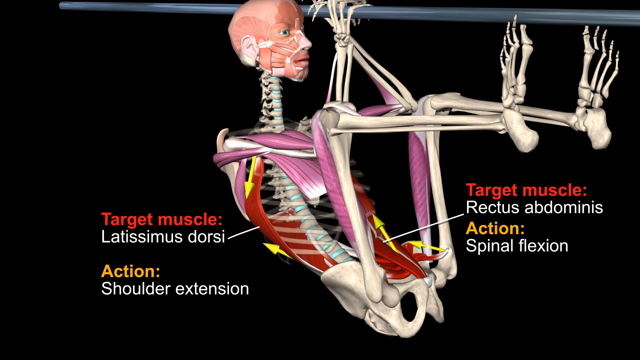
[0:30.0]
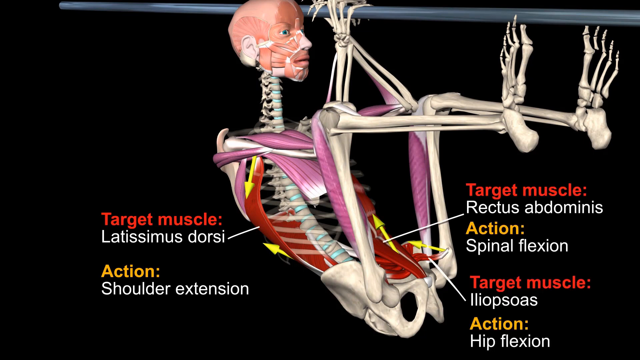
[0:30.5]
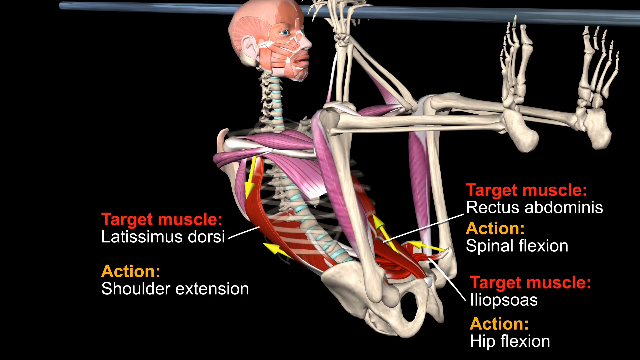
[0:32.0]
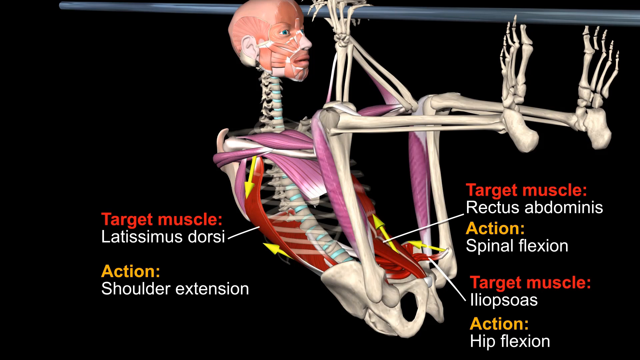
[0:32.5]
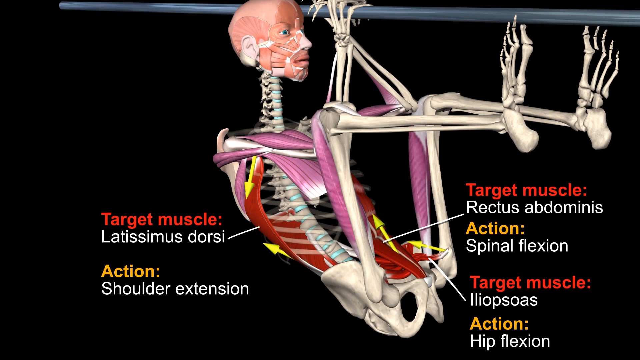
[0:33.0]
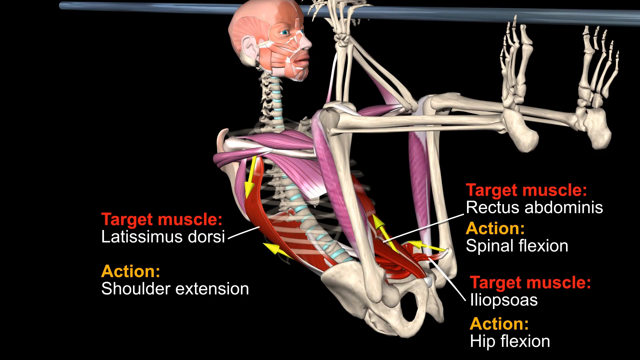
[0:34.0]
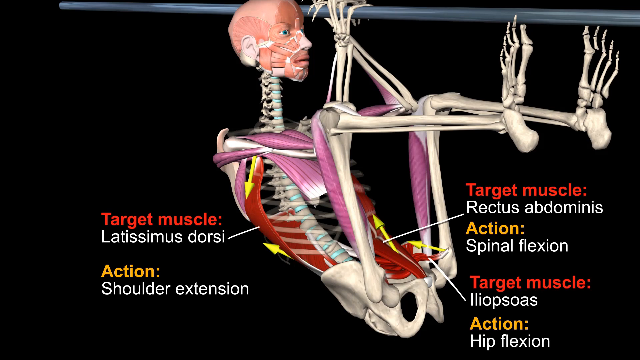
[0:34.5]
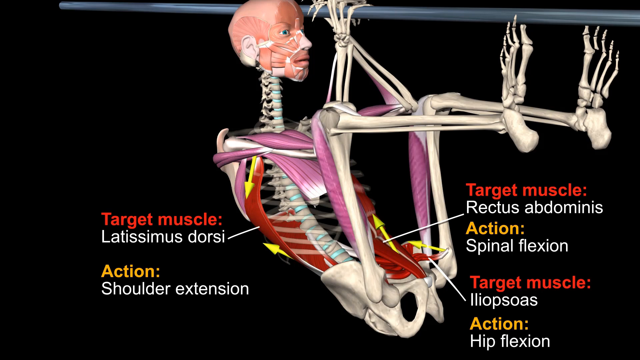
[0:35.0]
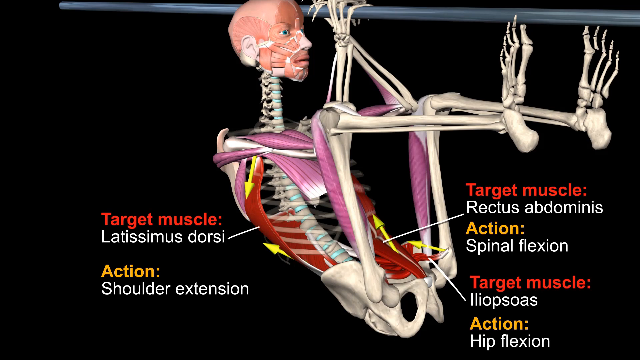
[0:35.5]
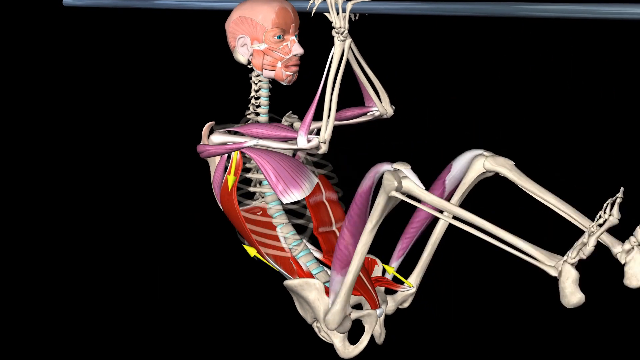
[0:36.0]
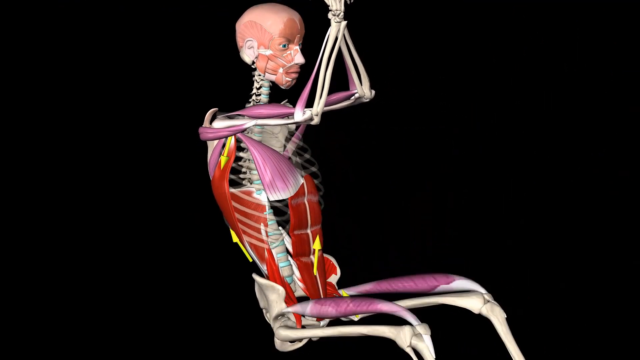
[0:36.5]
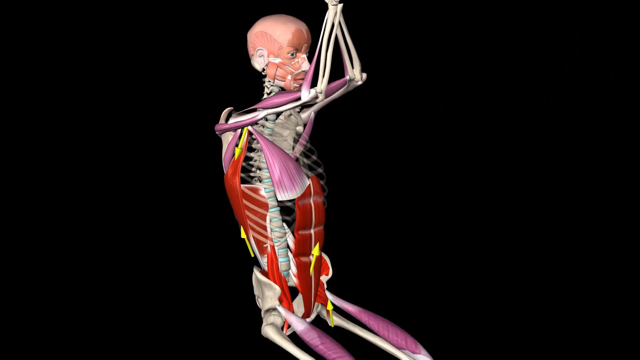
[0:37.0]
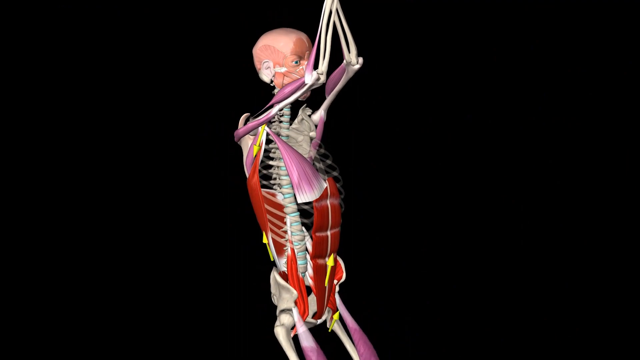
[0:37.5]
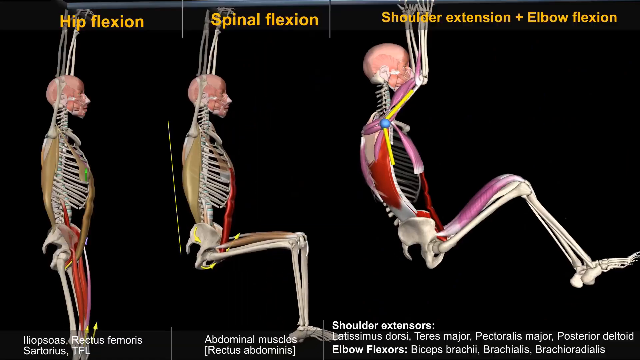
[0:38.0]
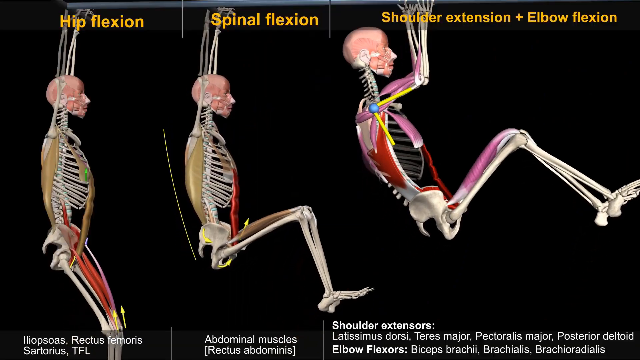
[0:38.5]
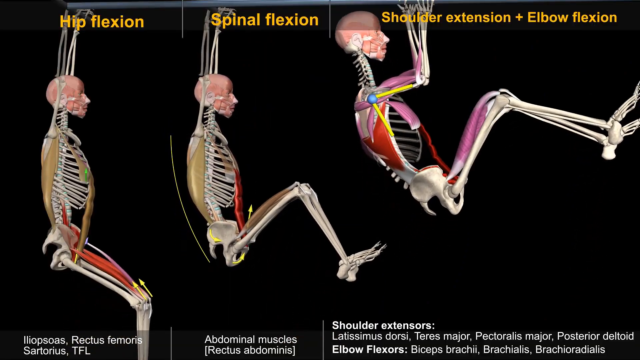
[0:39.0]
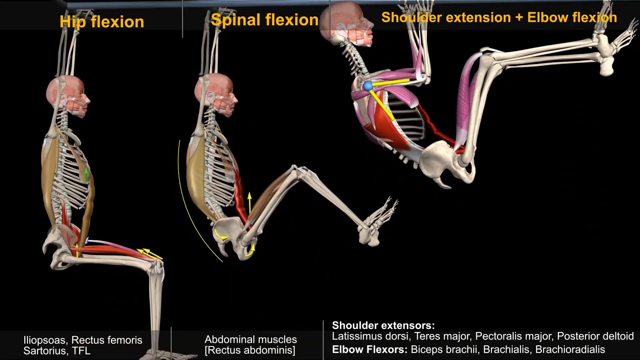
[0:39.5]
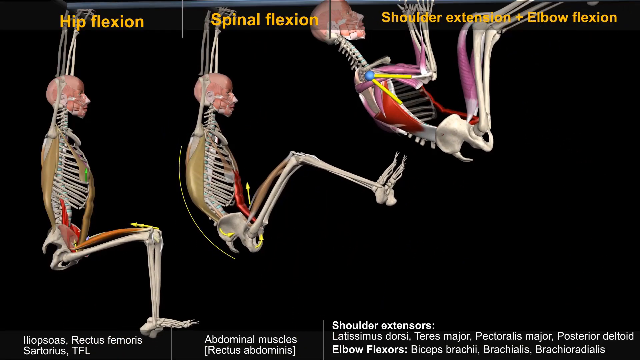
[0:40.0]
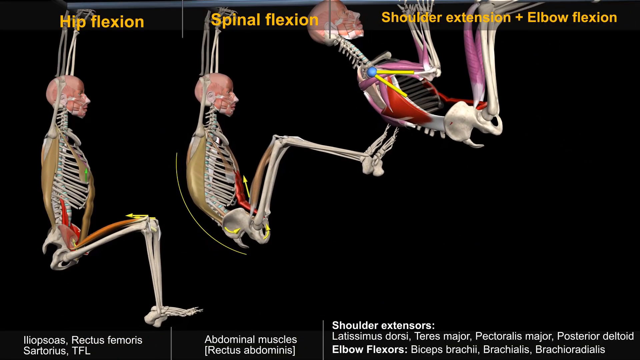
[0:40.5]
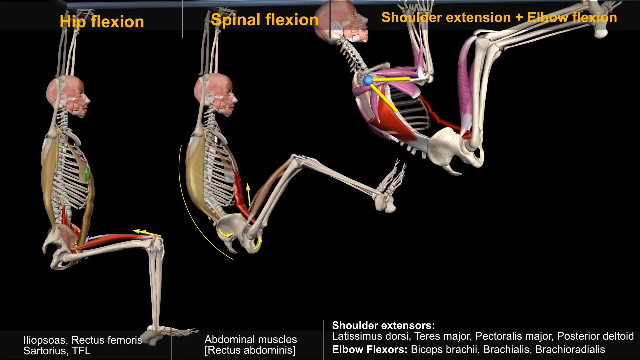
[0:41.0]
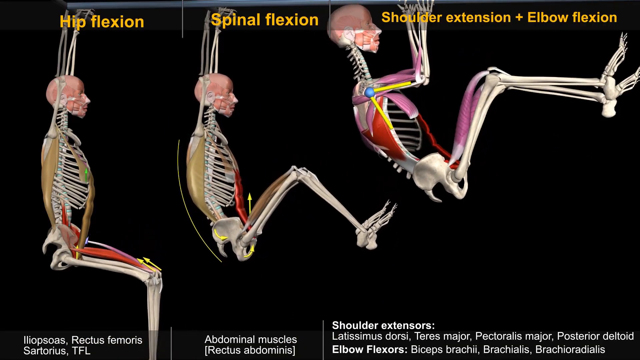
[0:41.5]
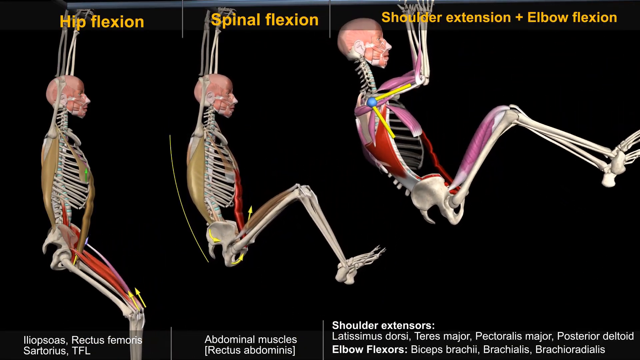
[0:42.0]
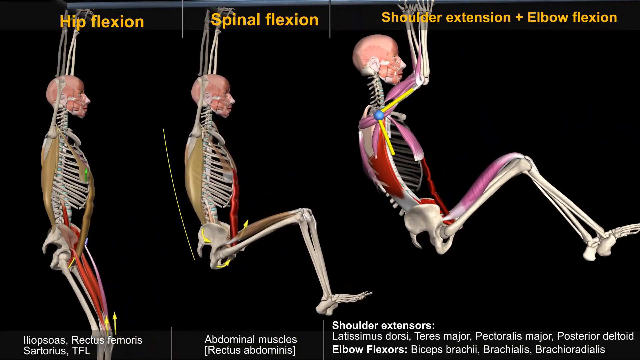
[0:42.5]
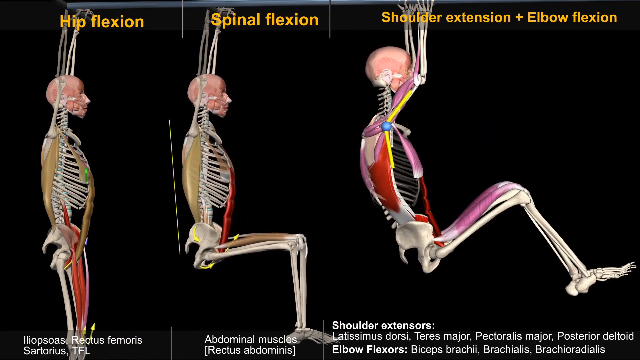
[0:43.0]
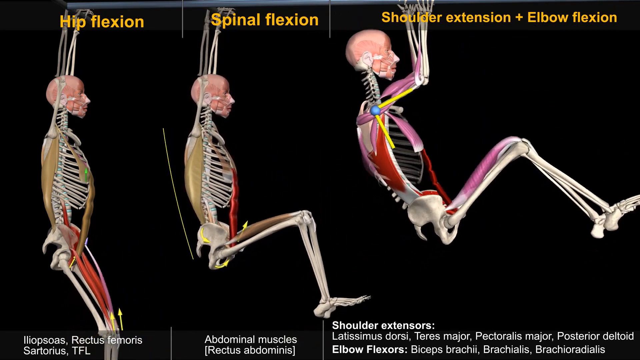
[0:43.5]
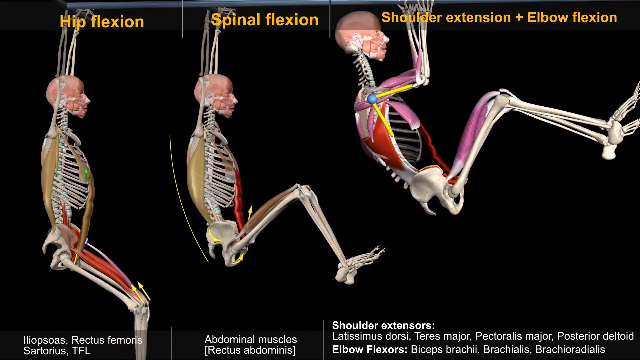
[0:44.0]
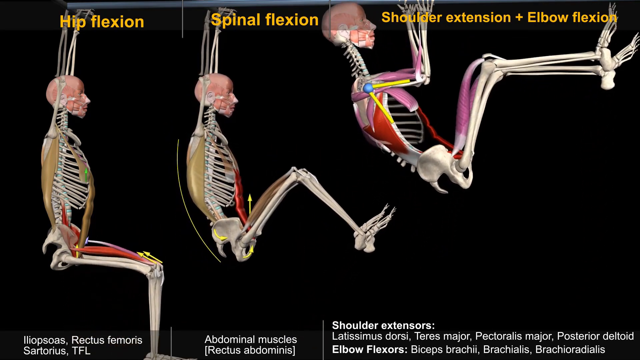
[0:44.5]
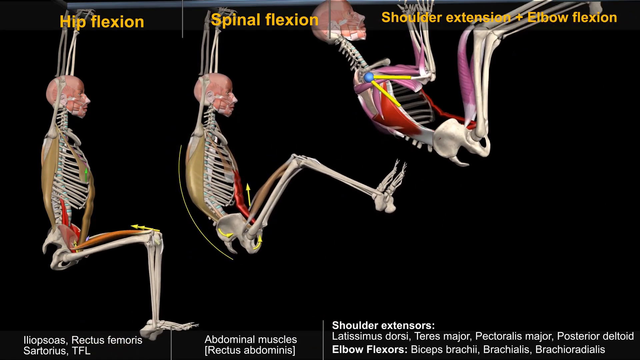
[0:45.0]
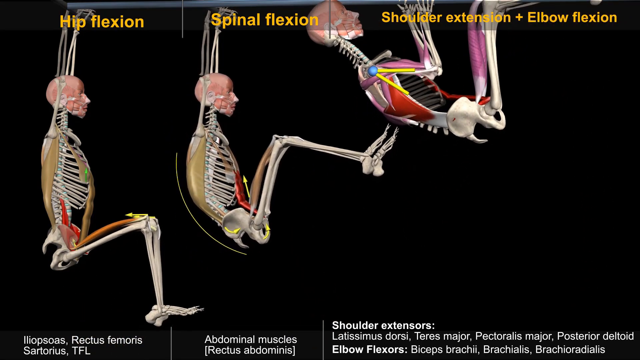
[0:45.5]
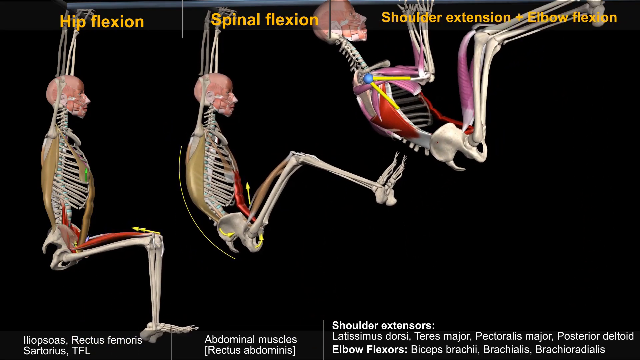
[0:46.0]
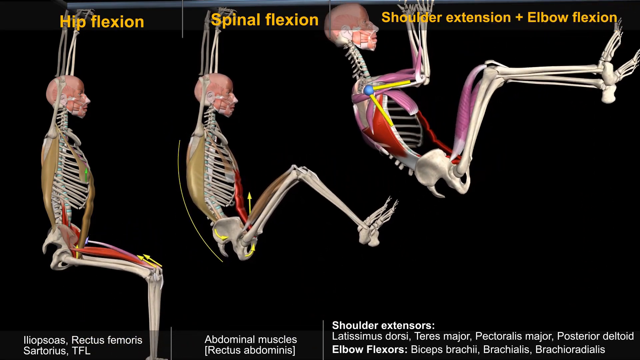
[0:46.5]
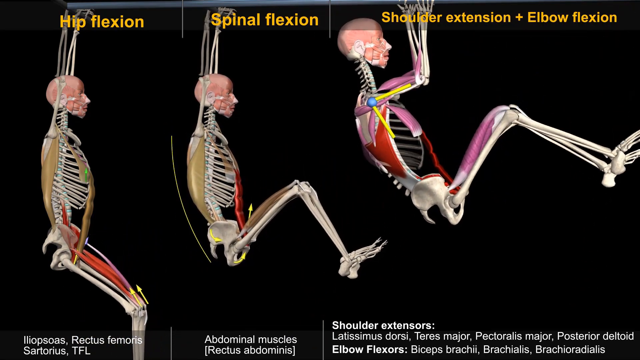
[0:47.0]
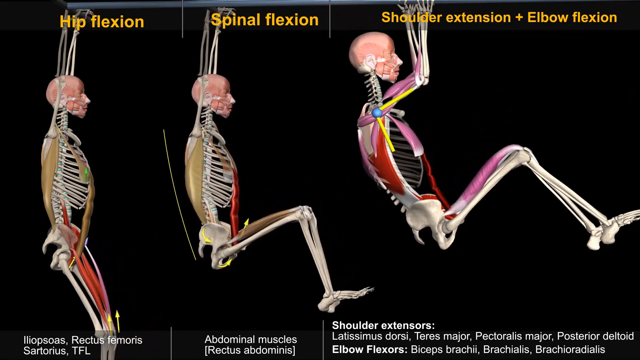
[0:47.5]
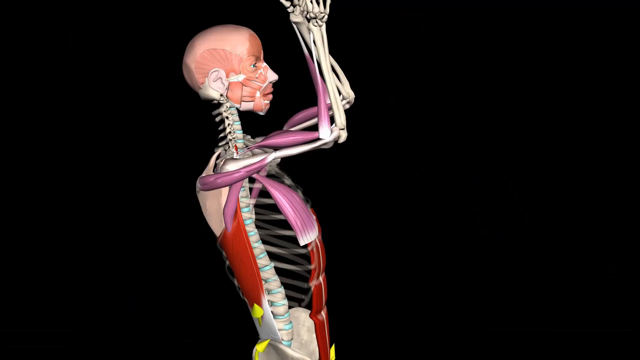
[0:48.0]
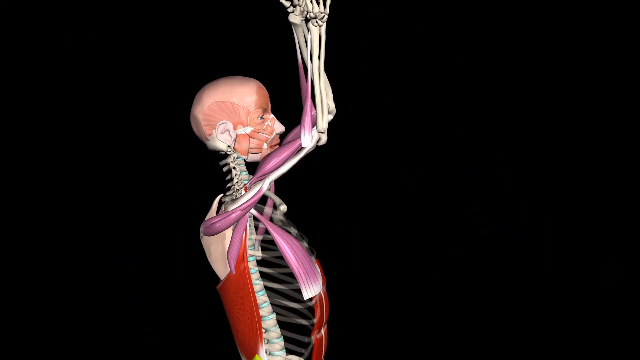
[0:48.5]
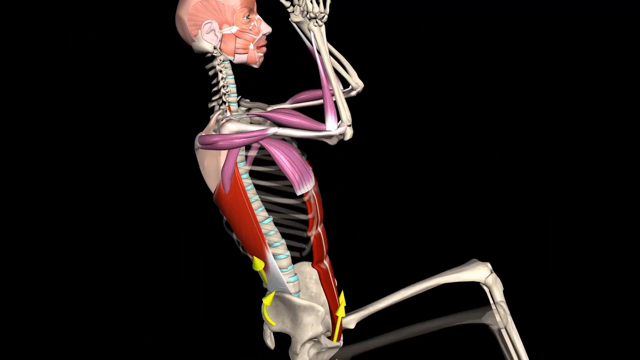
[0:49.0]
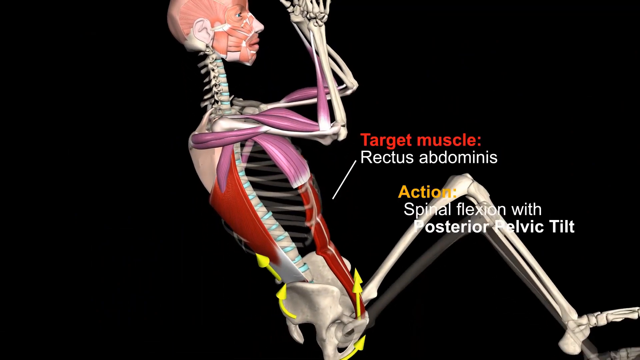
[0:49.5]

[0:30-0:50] A 3D image shows a skeleton doing a pull-up, with a silver bar at the top and a plain black background. The skeleton's face has muscles on it, and many white bones are visible along with other muscles depicted in purple and red. Muscles are listed on the screen in white, with "target muscle" and "action" labeled and pointing to different parts of the skeleton. Yellow arrows on the skeleton's body apparently show which muscles flex during the exercise. The skeleton holds the position, then lowers itself down. A different shot then shows three skeletons, each holding on to a silver bar and doing the pull-up. The left one lifts its legs; the second holds on to the bar and lifts its legs up into the air, bending the knees; the third pulls itself all the way up, bending its knees so they almost touch the pole at the top, making it the most advanced. Yellow arrows are depicted on the muscles of each skeleton, and the arrows kind of move upward as the skeletons move, showing how the muscles flex.